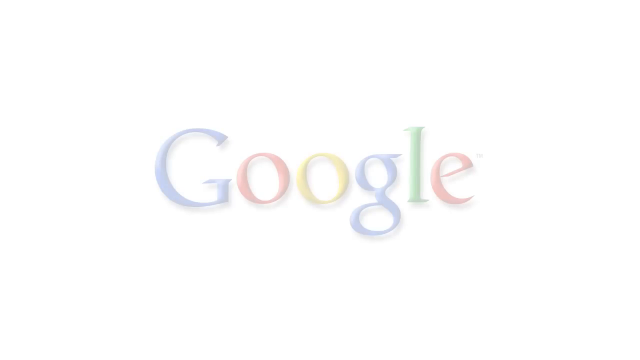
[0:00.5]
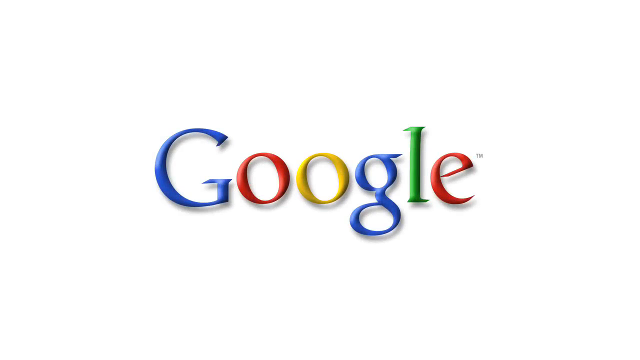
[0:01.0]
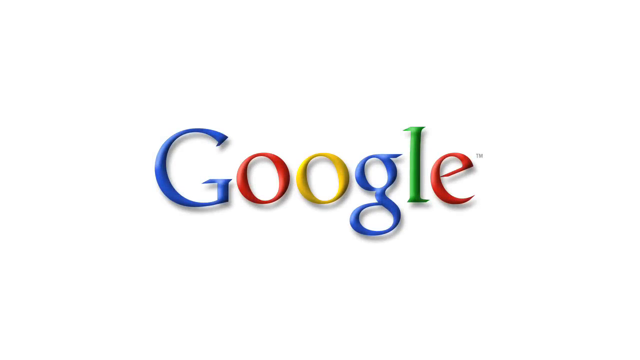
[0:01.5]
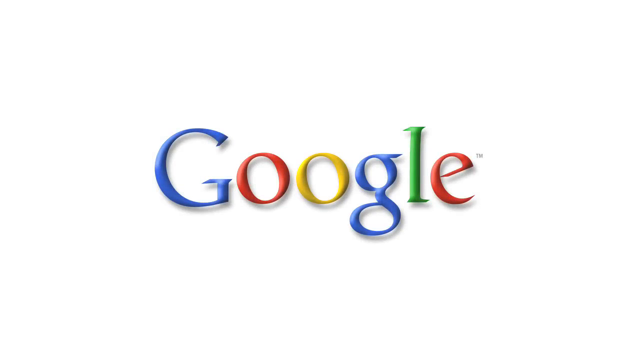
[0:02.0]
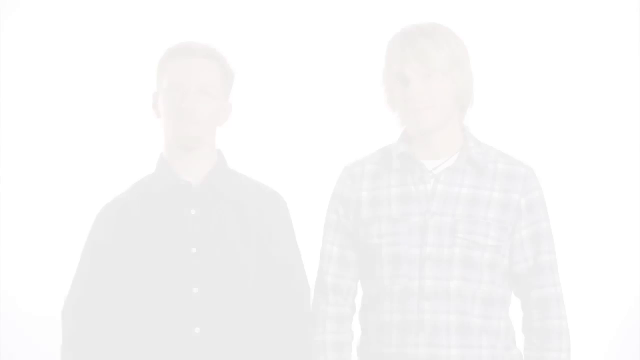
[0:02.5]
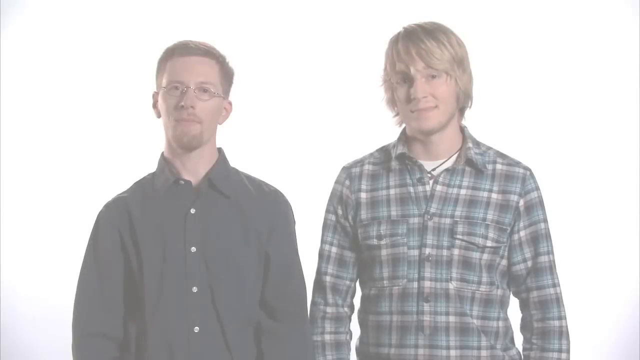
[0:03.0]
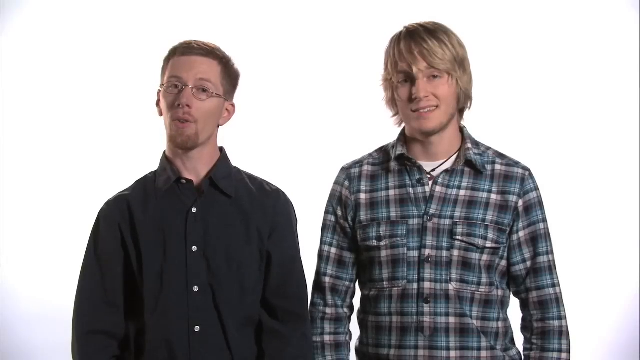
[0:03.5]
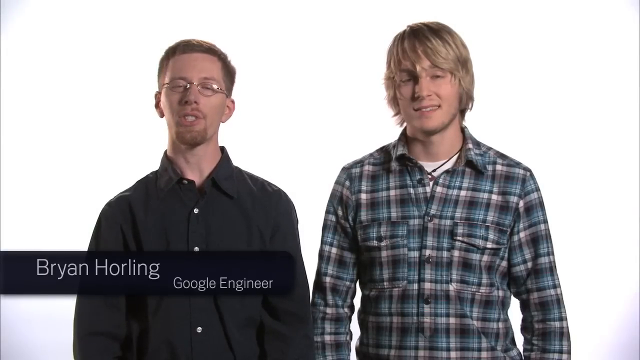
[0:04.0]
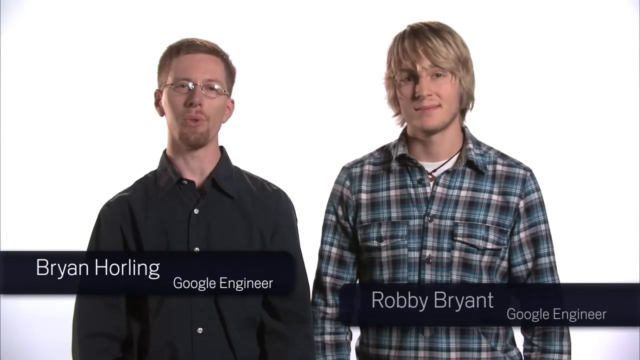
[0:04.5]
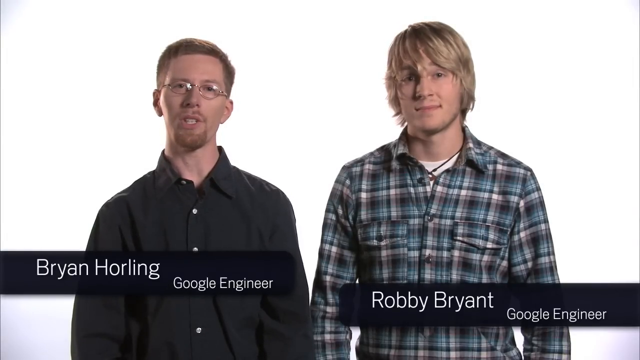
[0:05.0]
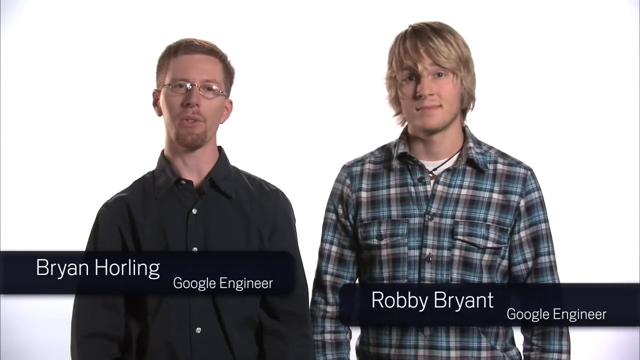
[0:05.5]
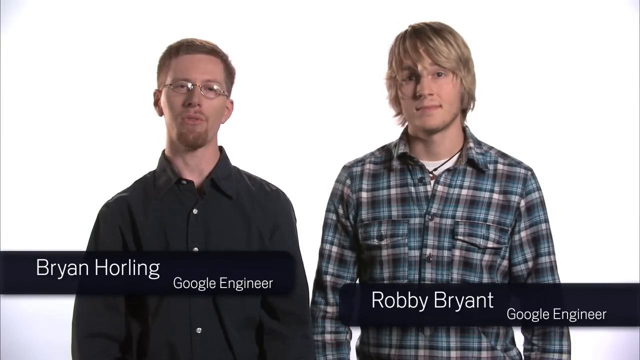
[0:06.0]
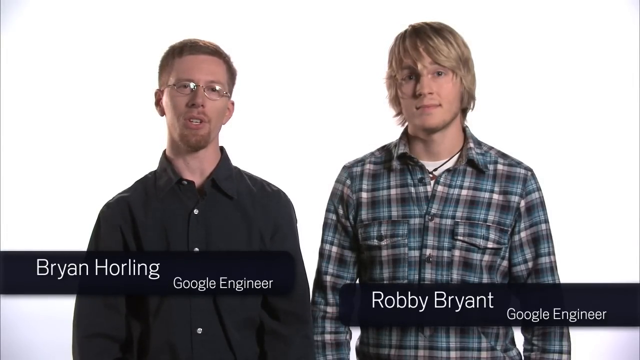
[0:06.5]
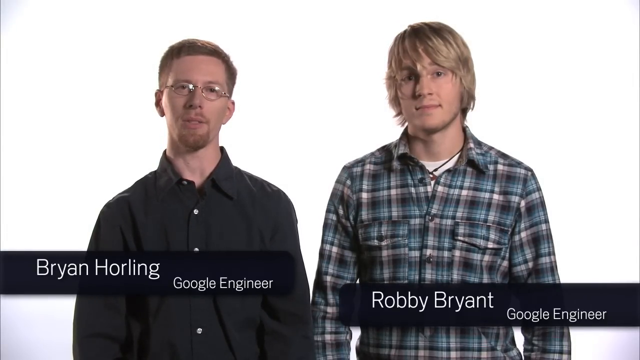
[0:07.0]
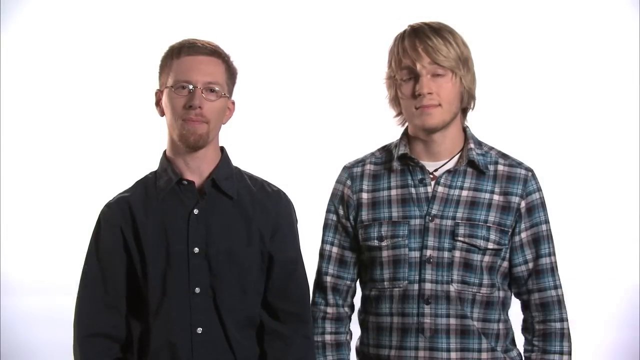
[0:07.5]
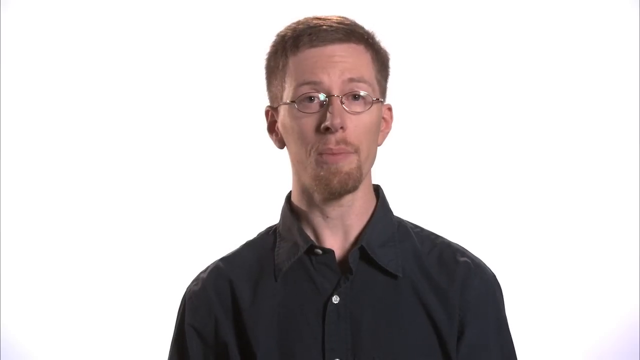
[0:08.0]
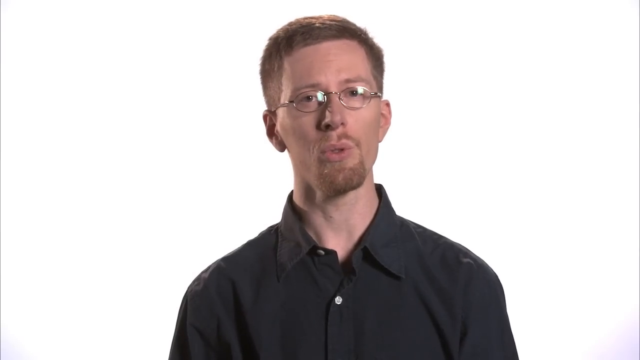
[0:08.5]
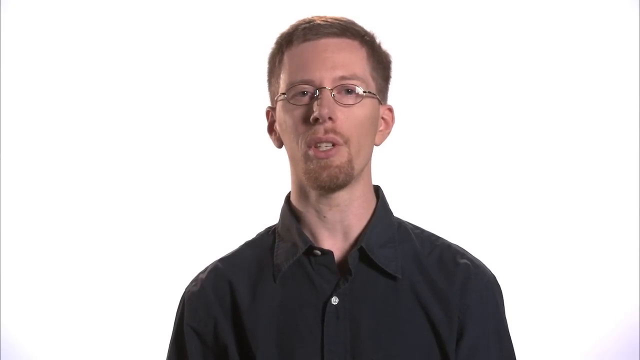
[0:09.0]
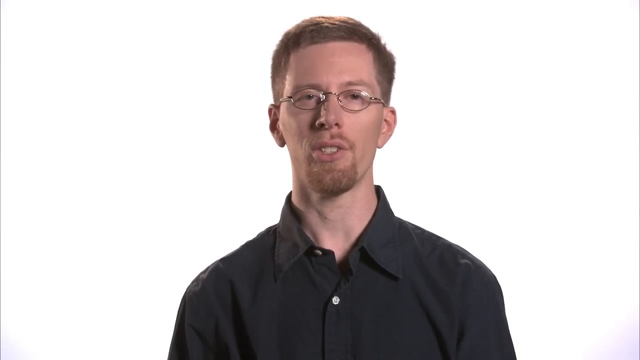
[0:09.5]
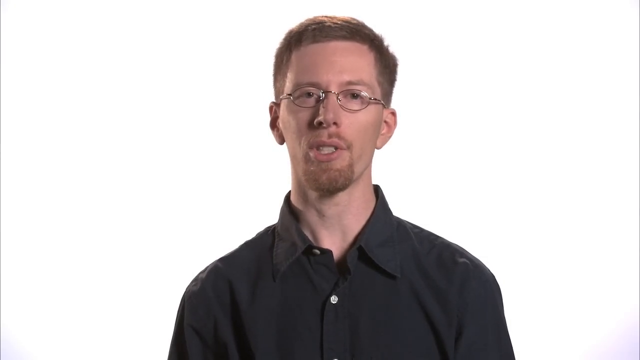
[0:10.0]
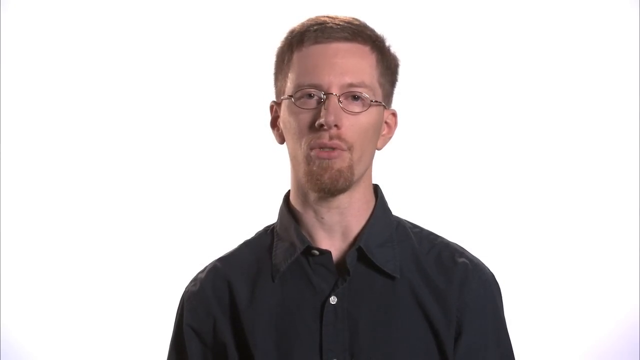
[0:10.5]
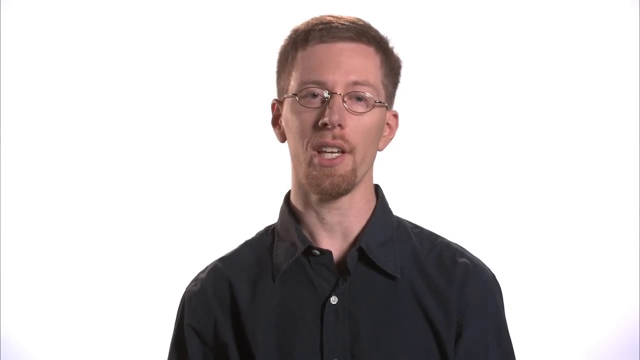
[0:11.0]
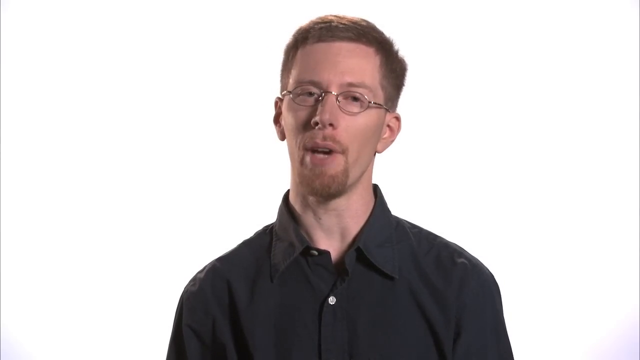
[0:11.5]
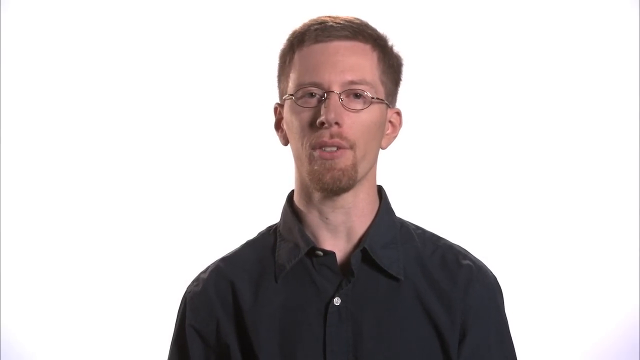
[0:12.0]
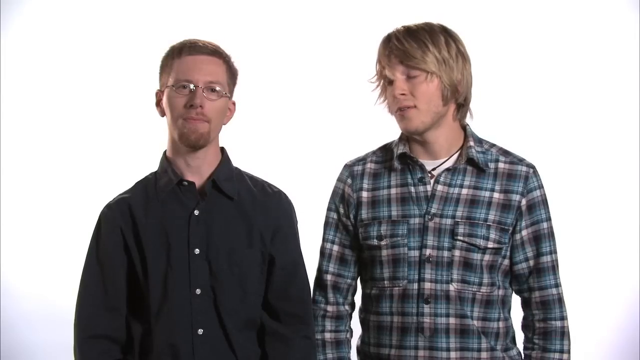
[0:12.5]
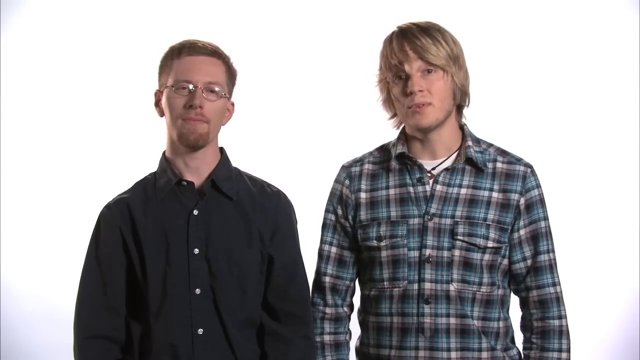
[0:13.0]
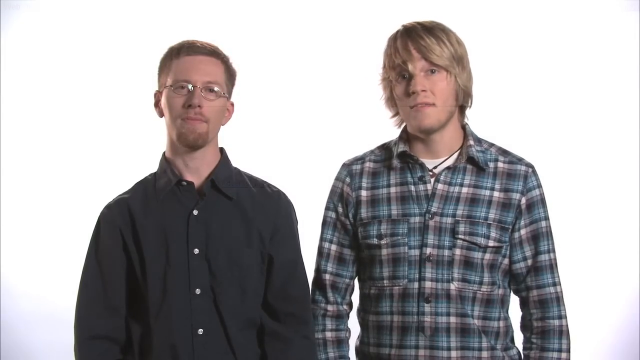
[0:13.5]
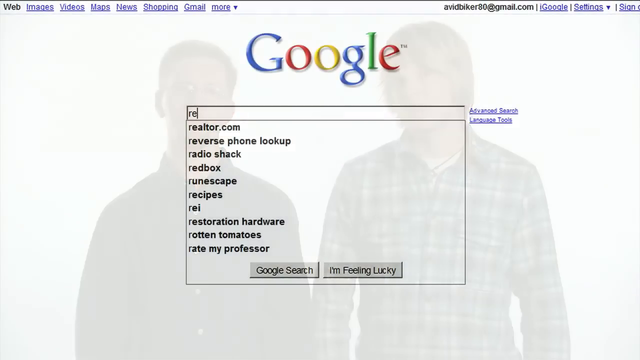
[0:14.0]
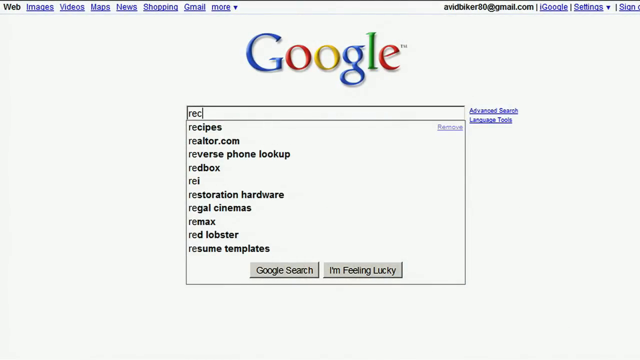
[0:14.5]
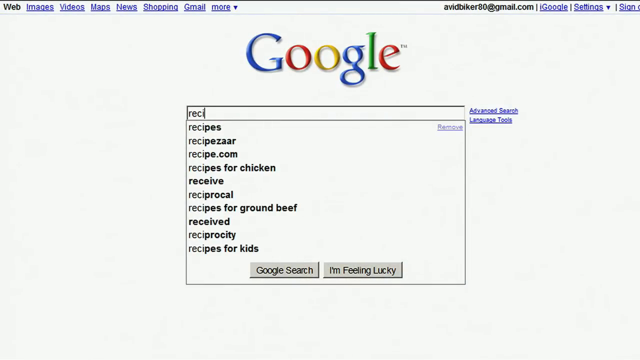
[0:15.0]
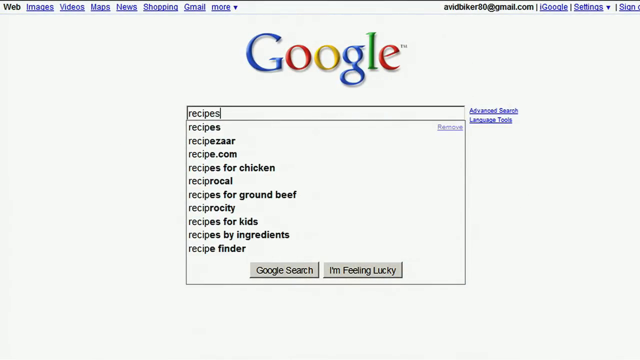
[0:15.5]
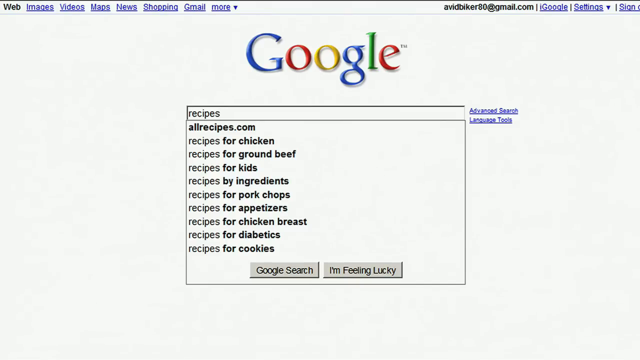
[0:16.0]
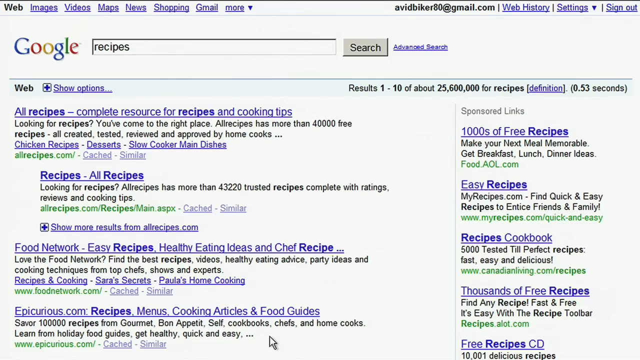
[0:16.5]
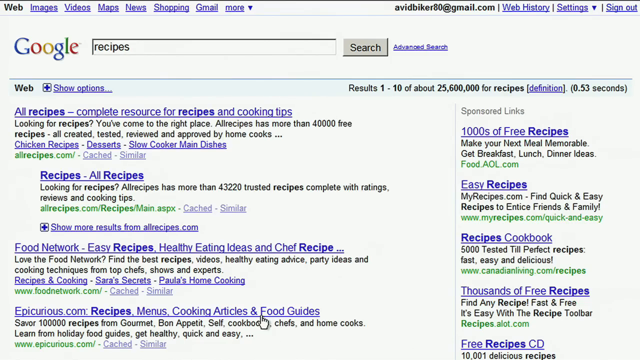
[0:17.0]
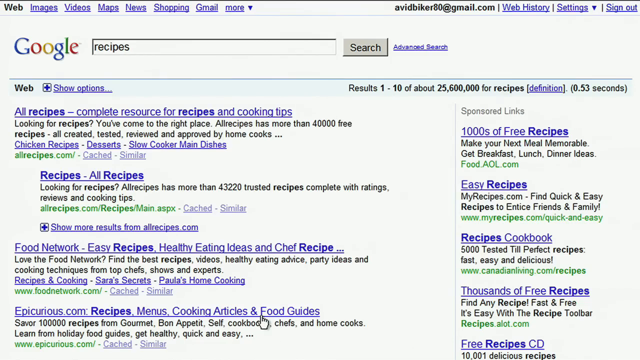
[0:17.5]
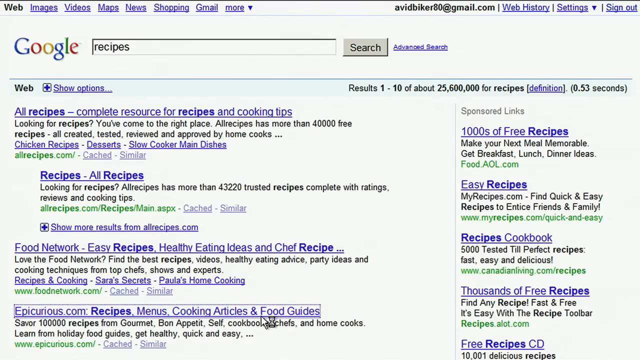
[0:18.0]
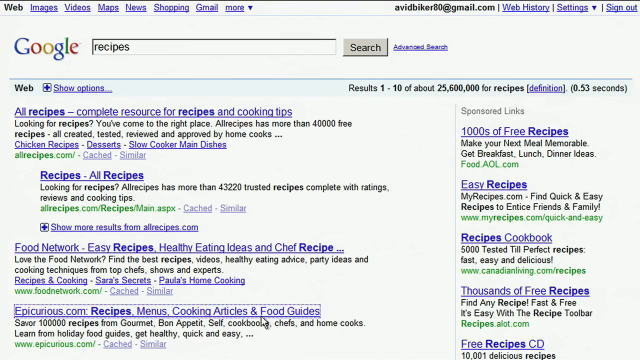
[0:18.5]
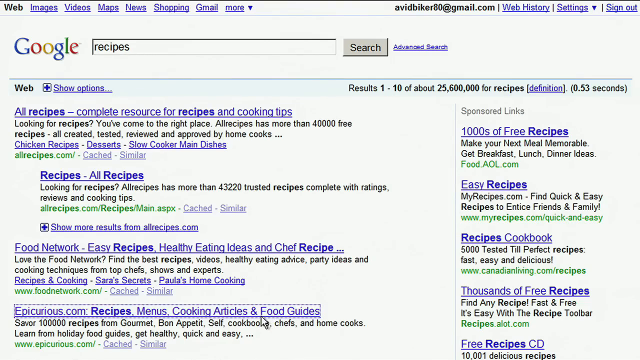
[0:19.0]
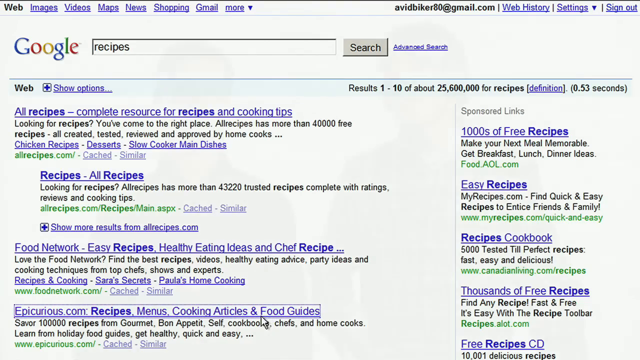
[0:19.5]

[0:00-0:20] The Google logo appears over a white screen and then vanishes. Two young white men appear. The one on the left has short brown hair, glasses and a goatee; his shoulders are really swooped down, and he wears a loose-fitting navy button-up shirt. To the right is a blonde man whose hair is a little longer and wispy around his face. He wears a little grin, has a bit of scruff around the chin, and stands with his arms a little out to the side, wearing a plaid shirt that is a bit tighter and a necklace. A title appears identifying the man on the left as Brian Horling, a Google engineer, and the man on the right as Robbie Bryant, also a Google engineer. A close-up shows Brian talking, quite expressive with his eyes; his right brow rises for a second. Then Bryant starts to talk. The video cuts to the Google website, where the word "recipes" is typed in, then cuts to the search results, and images of the two men appear on top of the search results.